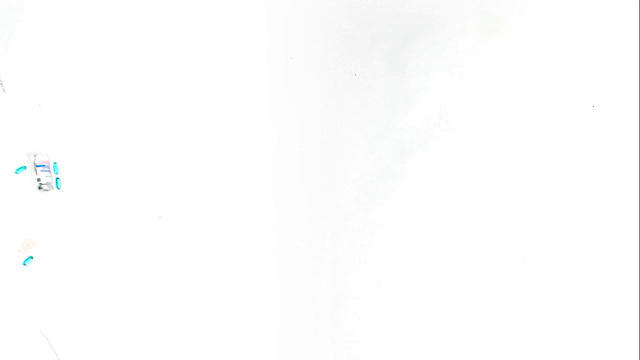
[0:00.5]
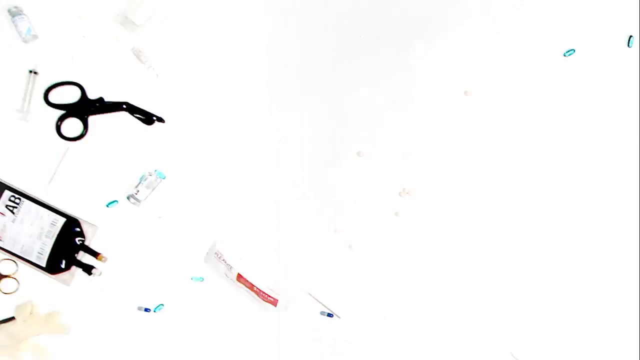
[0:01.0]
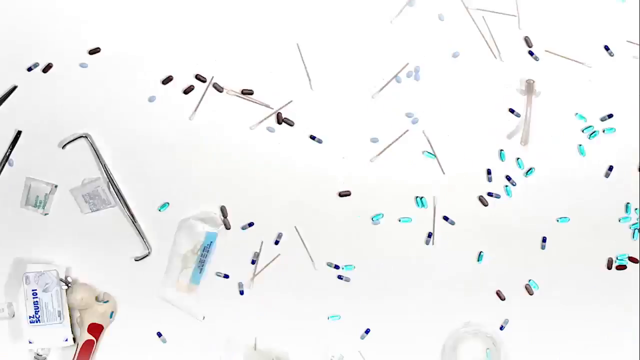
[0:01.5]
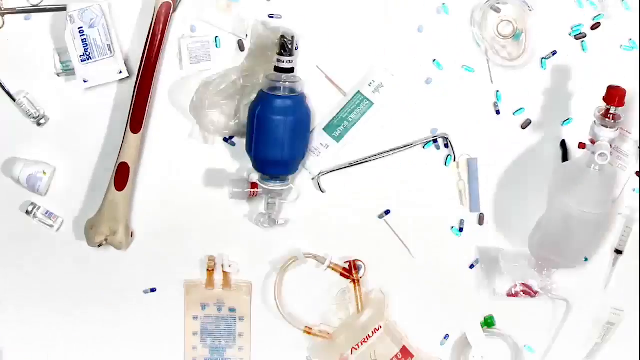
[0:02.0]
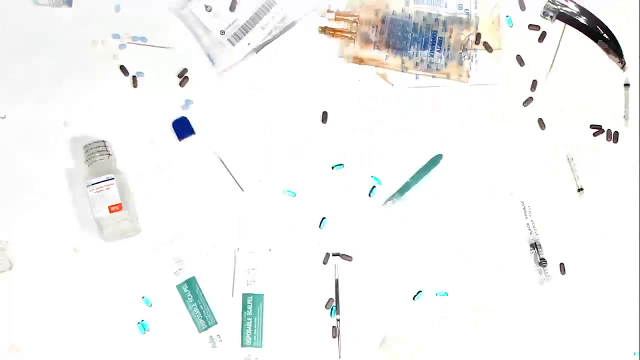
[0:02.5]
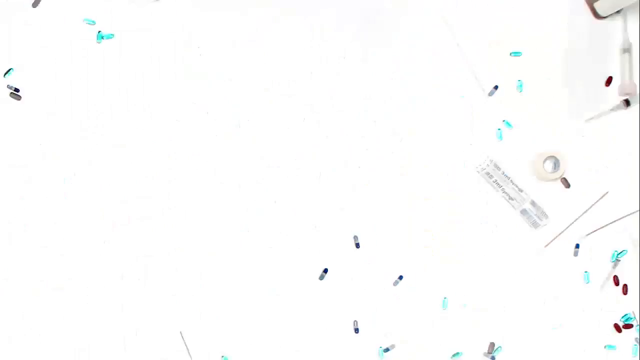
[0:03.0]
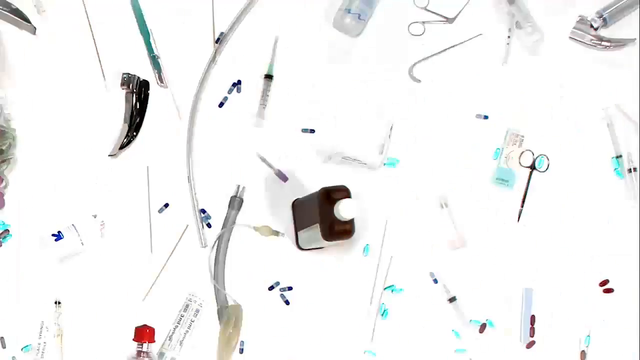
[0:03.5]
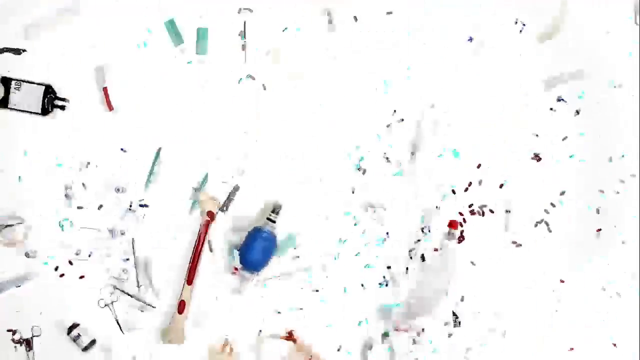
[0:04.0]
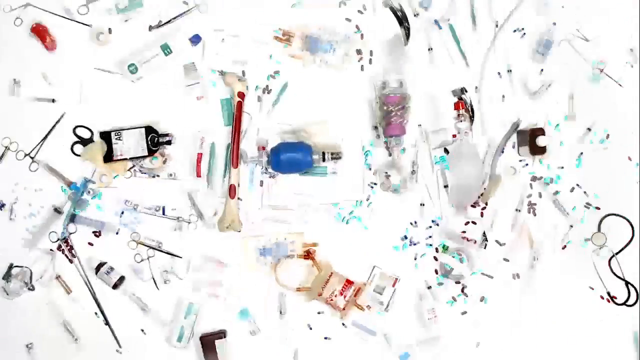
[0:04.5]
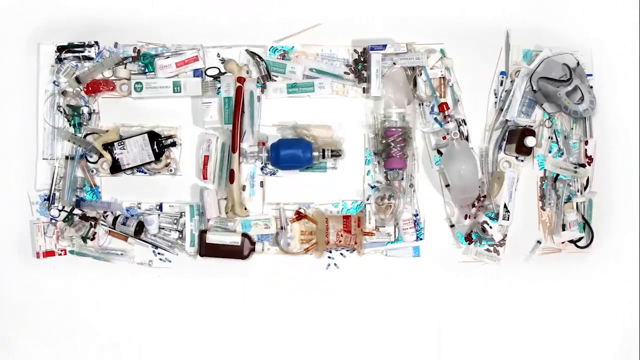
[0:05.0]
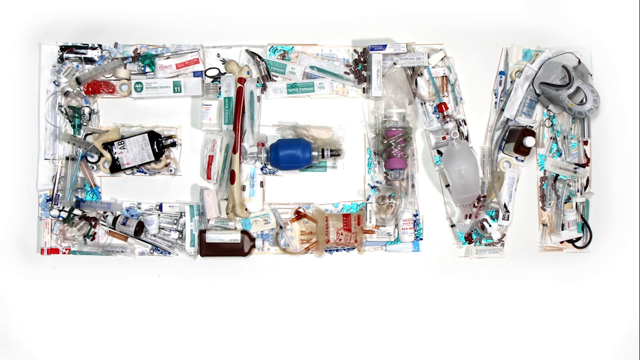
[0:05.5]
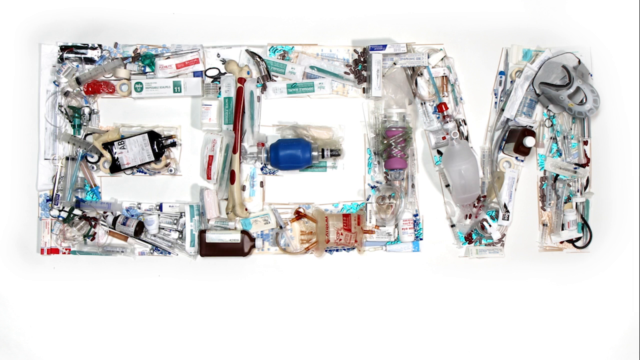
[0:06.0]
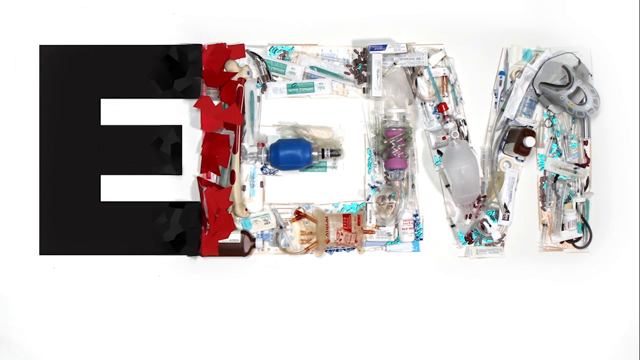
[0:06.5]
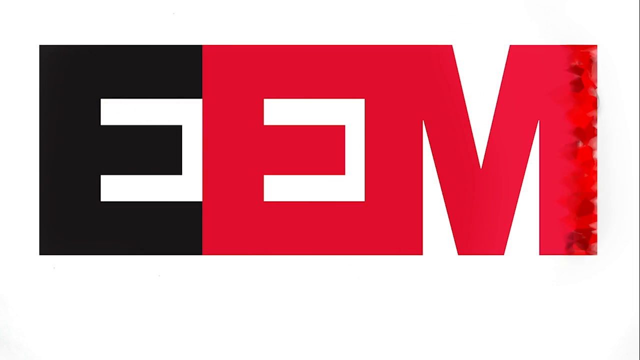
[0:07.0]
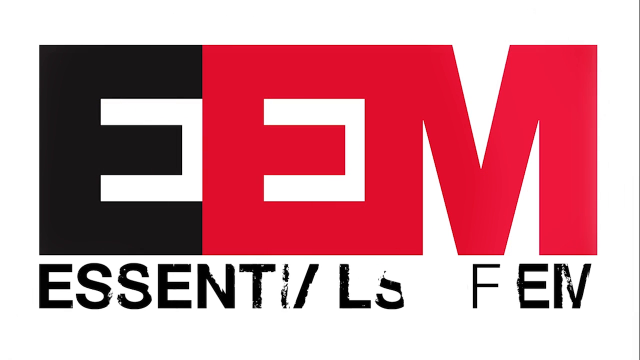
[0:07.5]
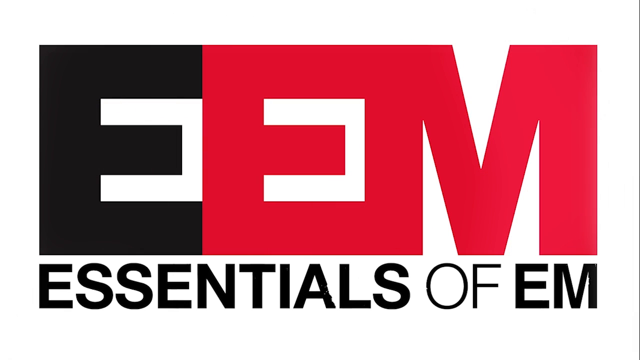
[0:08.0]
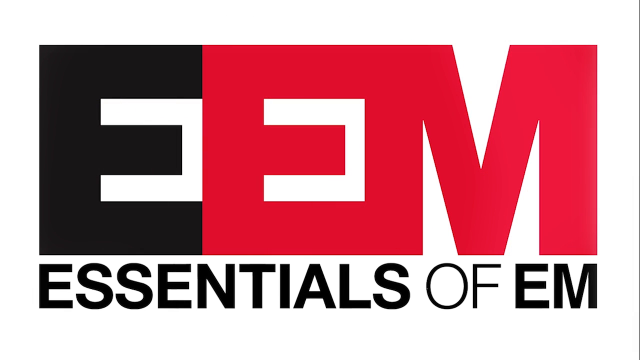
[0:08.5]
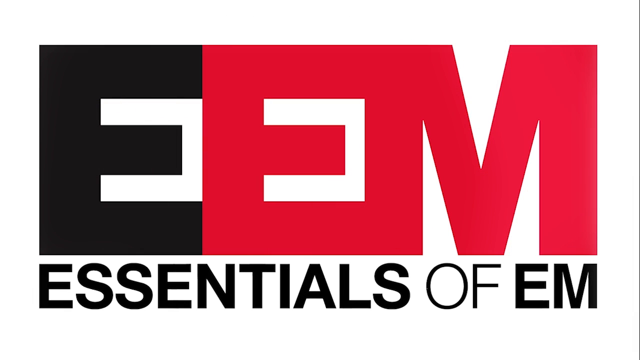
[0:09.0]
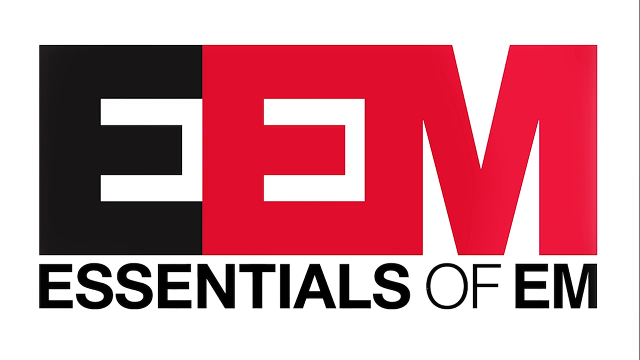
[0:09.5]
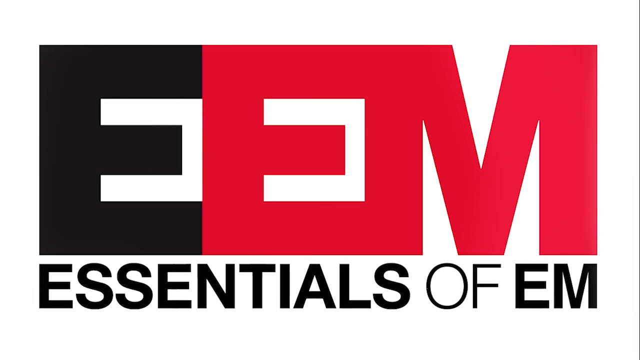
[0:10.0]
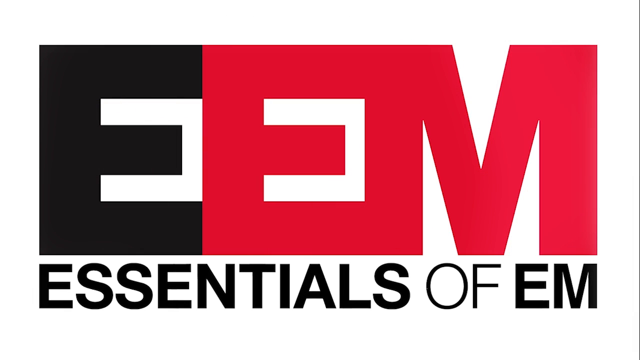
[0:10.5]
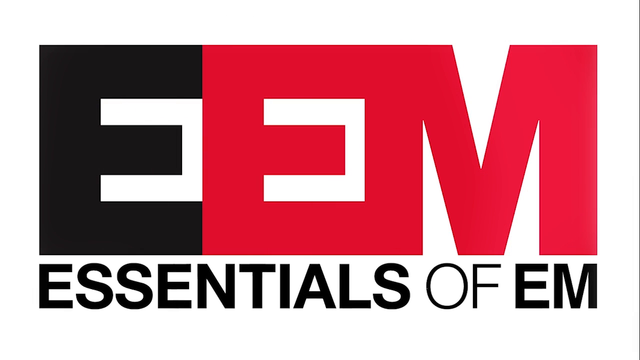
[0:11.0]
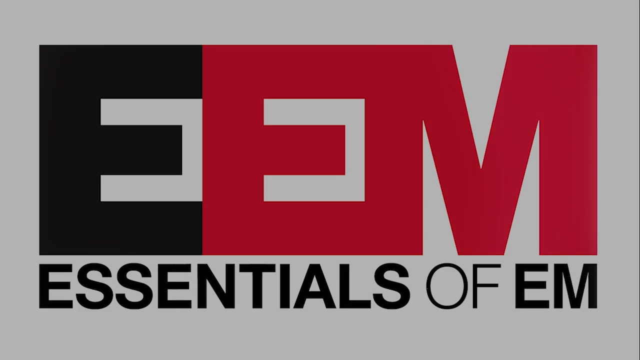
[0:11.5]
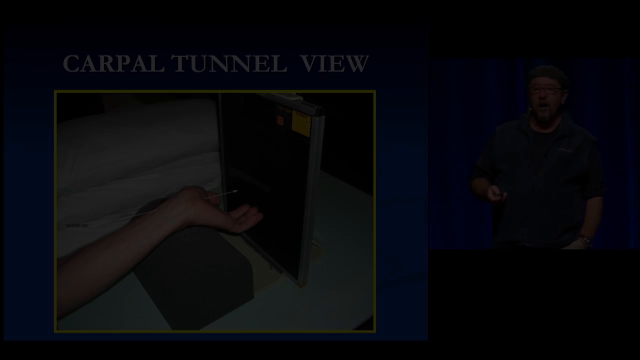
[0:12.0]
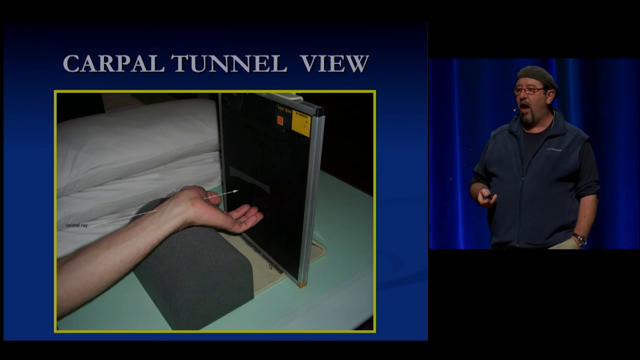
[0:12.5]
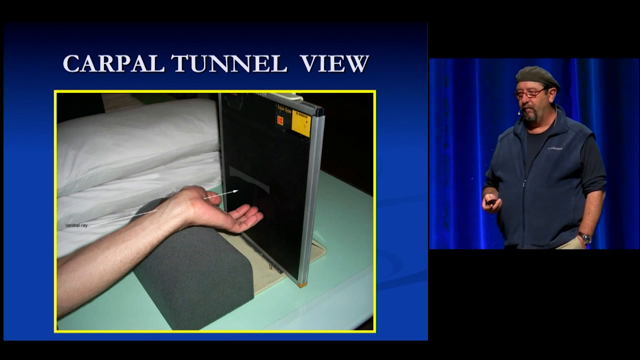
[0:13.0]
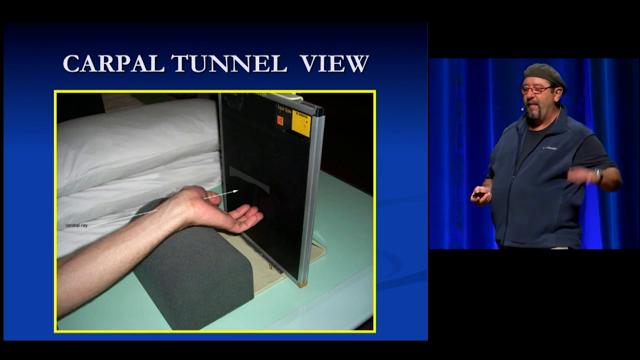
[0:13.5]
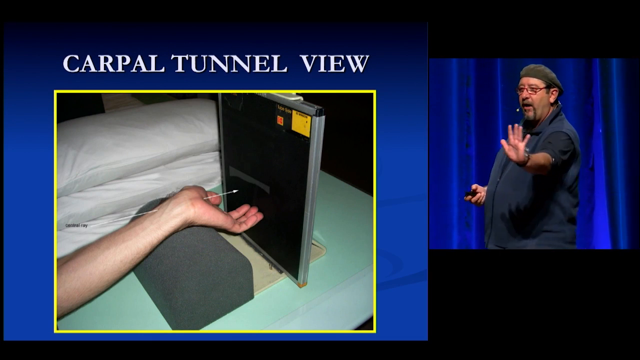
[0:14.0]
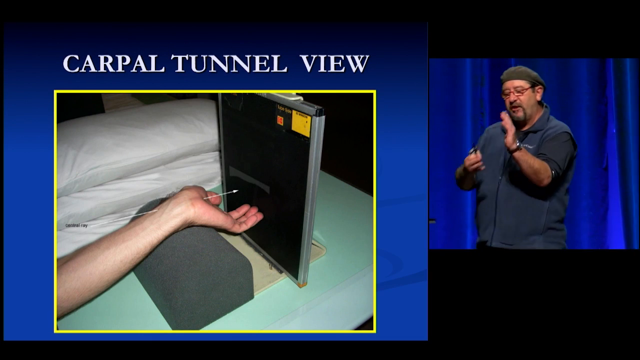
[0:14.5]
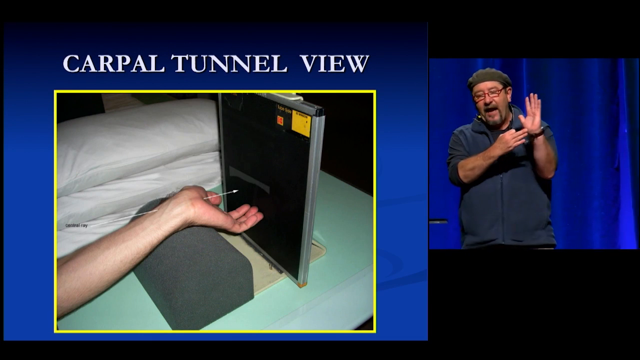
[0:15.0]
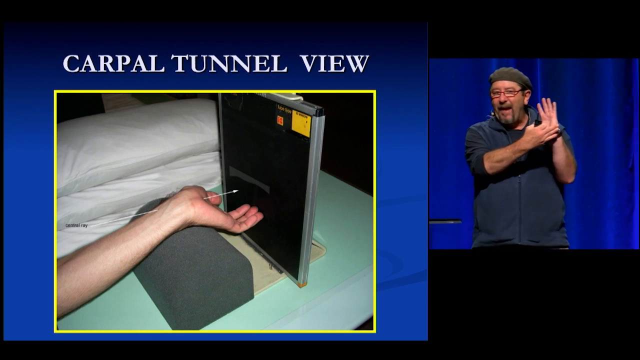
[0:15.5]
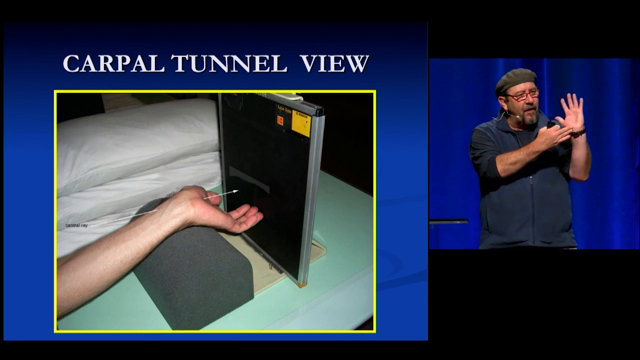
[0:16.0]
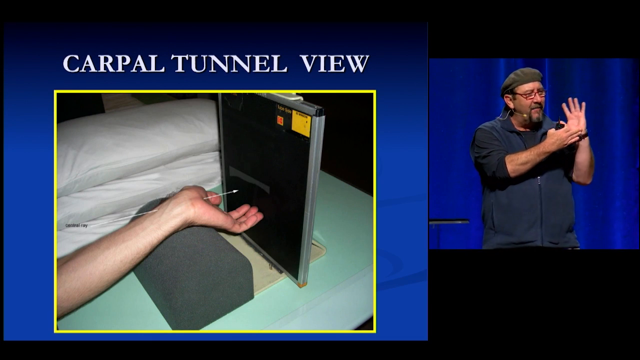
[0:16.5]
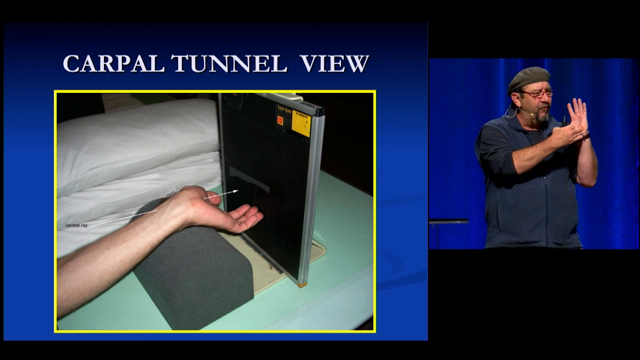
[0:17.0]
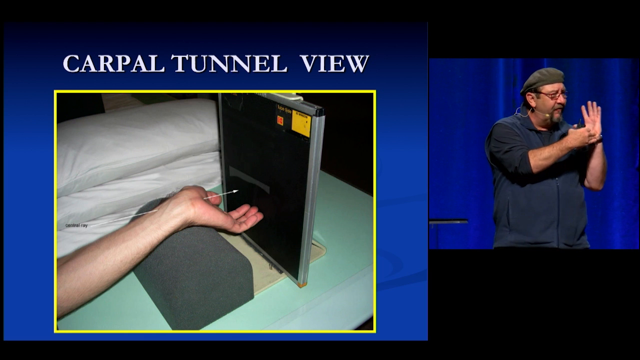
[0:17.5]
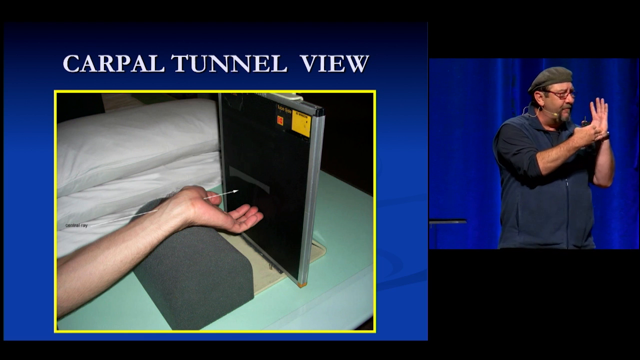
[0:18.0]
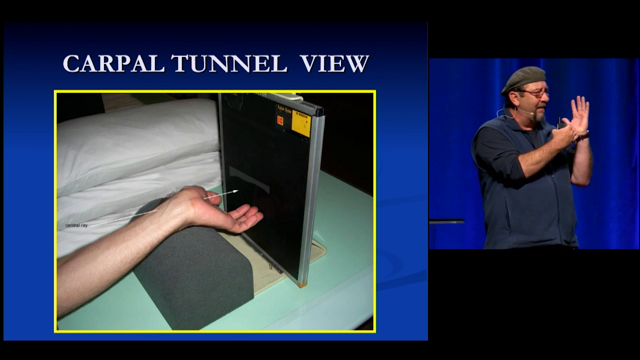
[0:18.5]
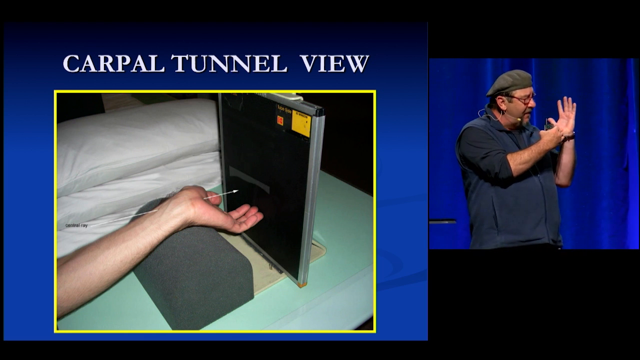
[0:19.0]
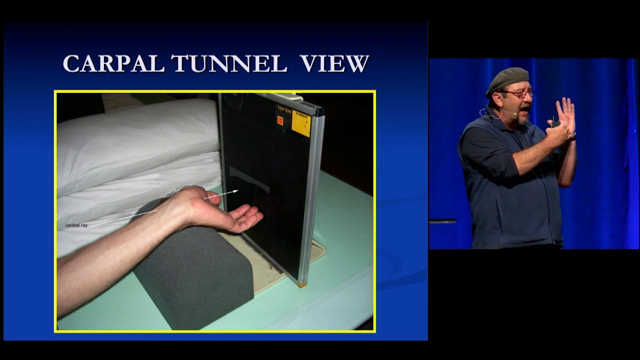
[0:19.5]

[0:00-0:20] The video opens with the EEM, or Essentials of M, credits: a bunch of medical items, including an IV drip bag, some tubes, medical or medicine bottles, pills, syringes and what look like medical scissors, come together on a white background and form the letters EEM, which stands for Essentials of M. It then cuts to a view split into two sections. The largest section is a photo insert titled "Carpal Tunnel View", showing a hand palm up on top of what looks like a gray cushion, with its fingers laying against a black panel with a silver frame standing vertically. On the right is the host or speaker, a man in his mid-40s wearing a beret and what looks like a North Face jacket. He is talking and making a lot of hand gestures, pointing at his hand and making a line gesture over the base of his hand. He is on a stage with blue curtains and appears to be talking to a large crowd.